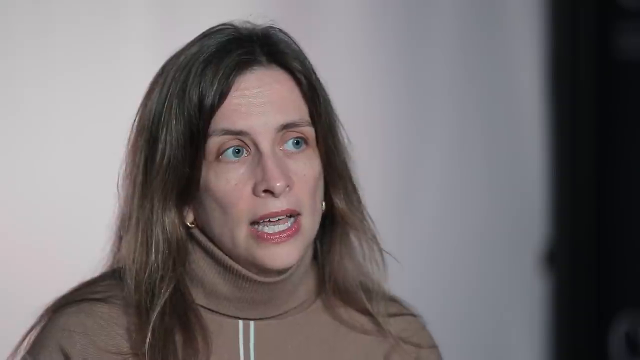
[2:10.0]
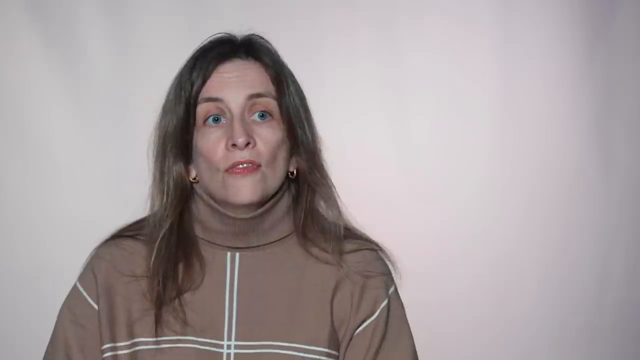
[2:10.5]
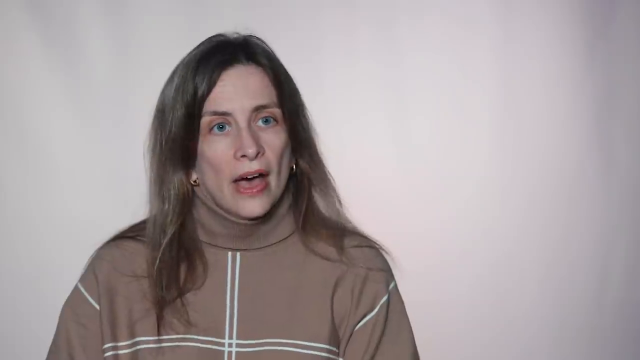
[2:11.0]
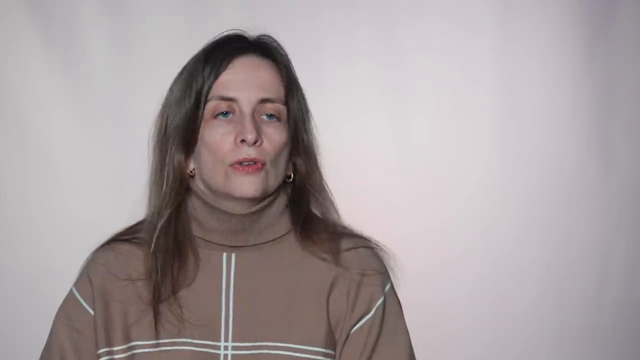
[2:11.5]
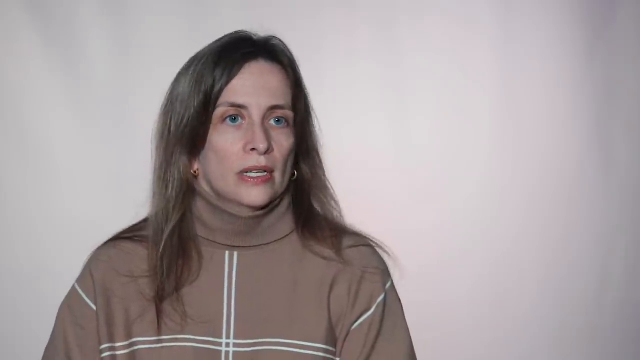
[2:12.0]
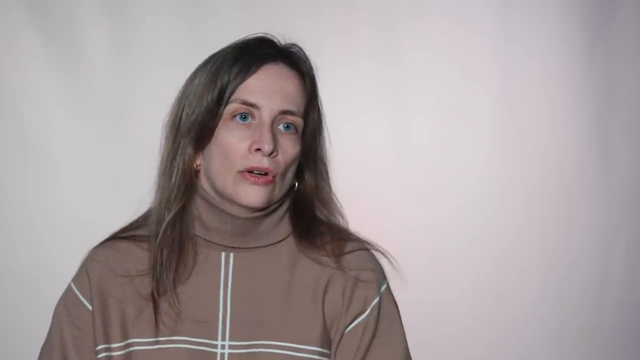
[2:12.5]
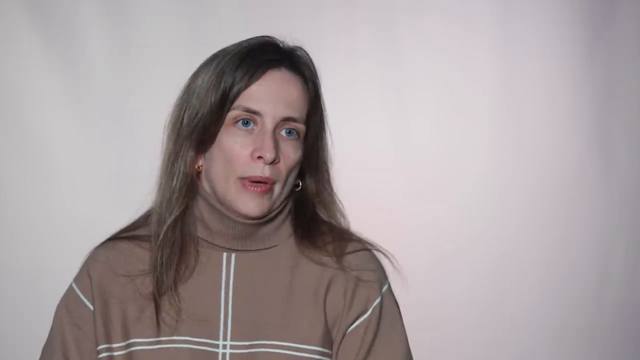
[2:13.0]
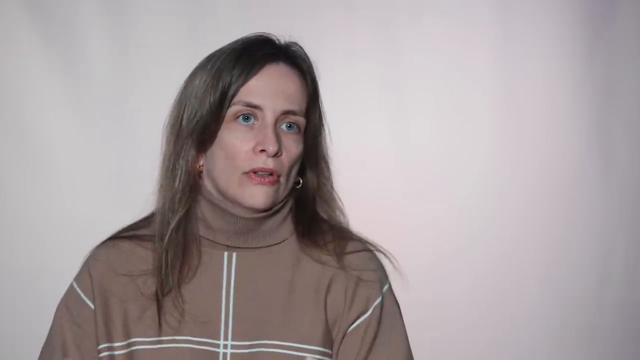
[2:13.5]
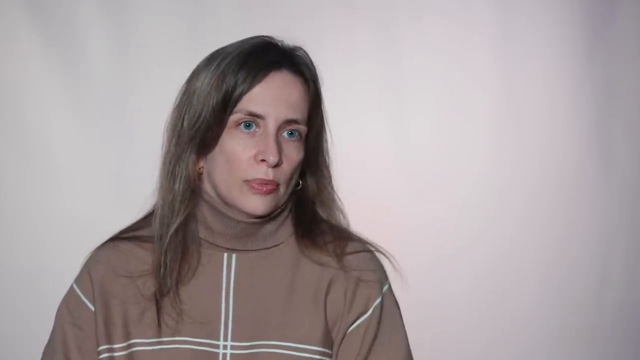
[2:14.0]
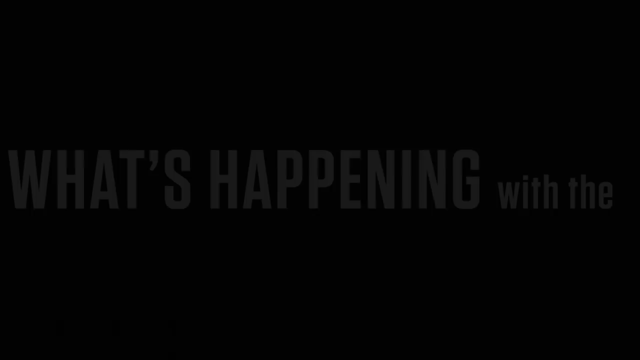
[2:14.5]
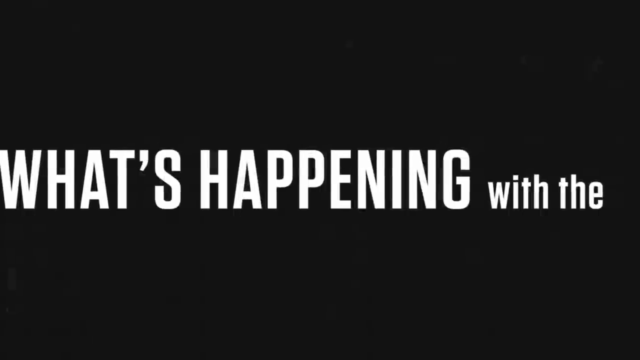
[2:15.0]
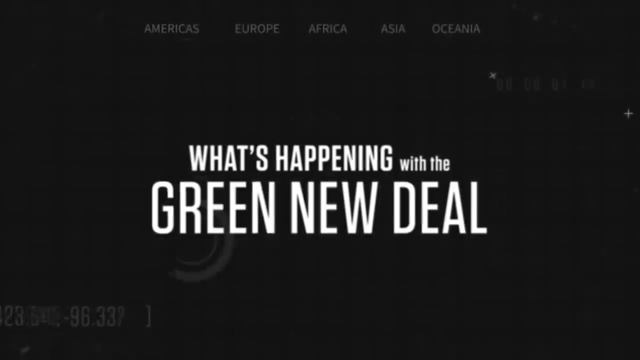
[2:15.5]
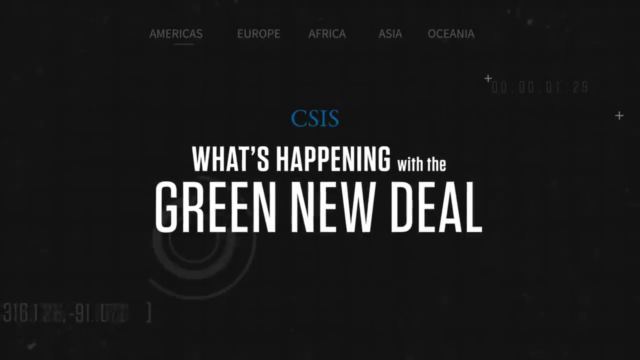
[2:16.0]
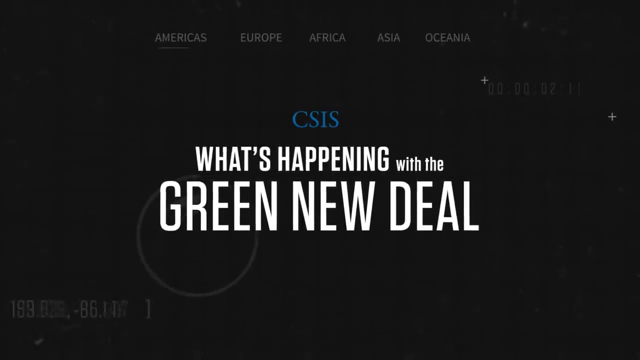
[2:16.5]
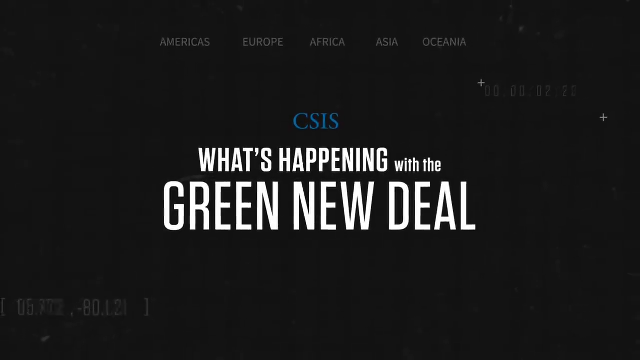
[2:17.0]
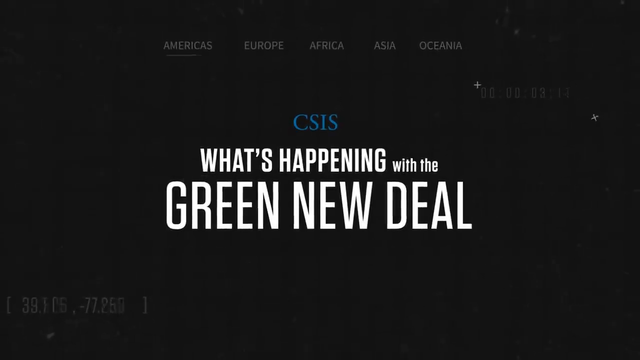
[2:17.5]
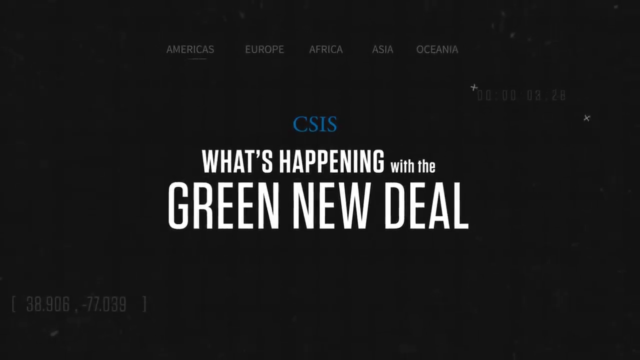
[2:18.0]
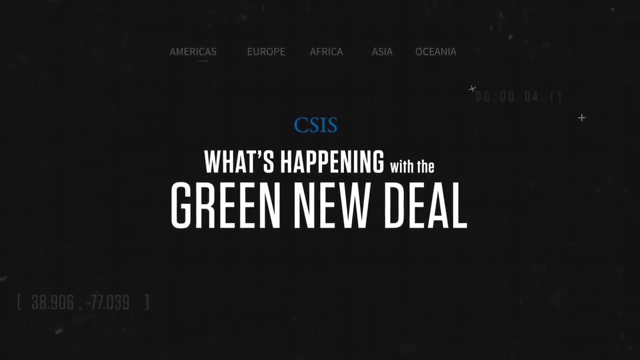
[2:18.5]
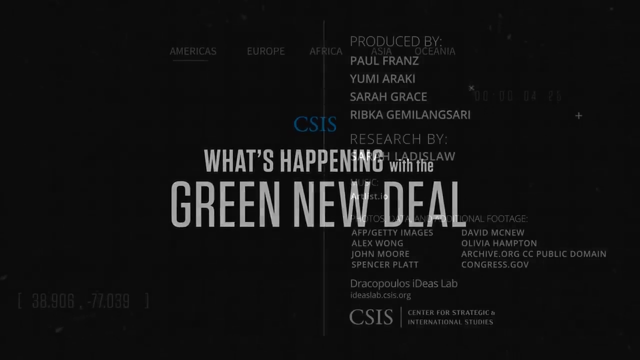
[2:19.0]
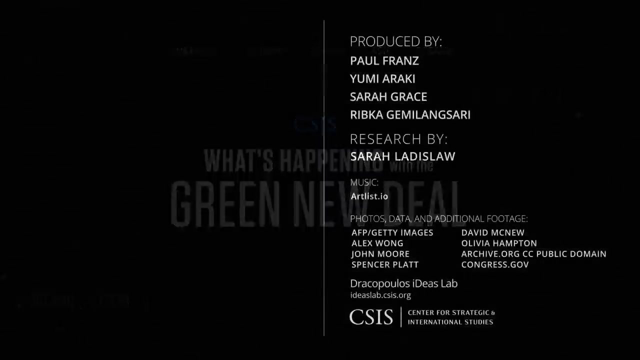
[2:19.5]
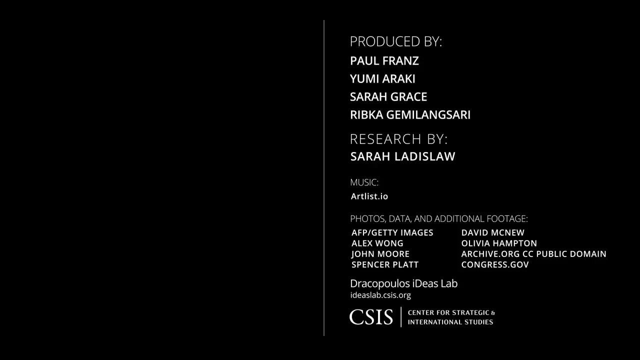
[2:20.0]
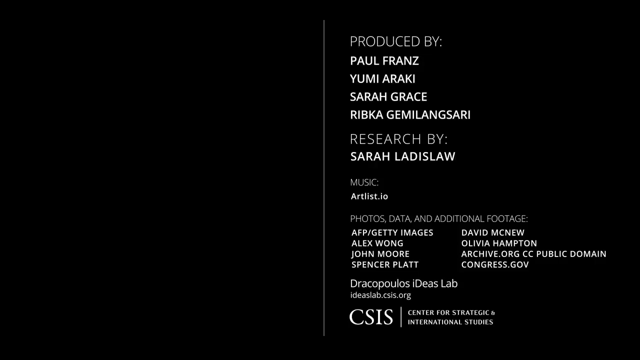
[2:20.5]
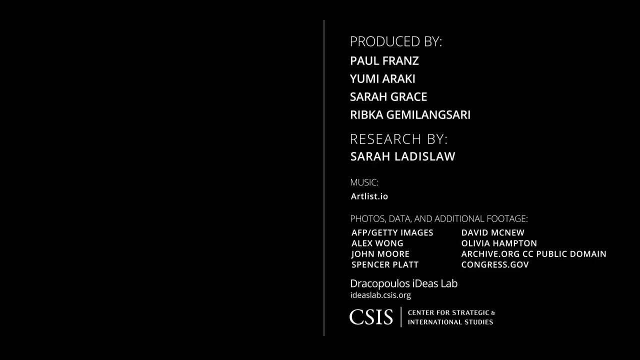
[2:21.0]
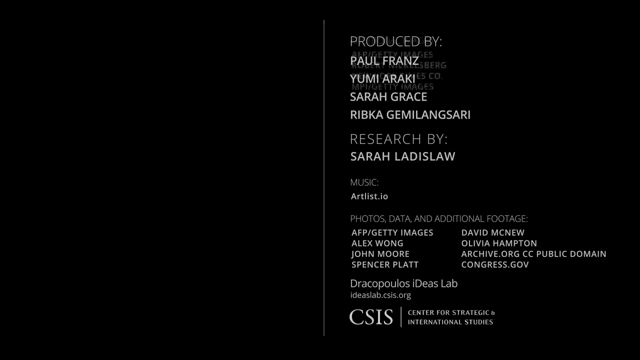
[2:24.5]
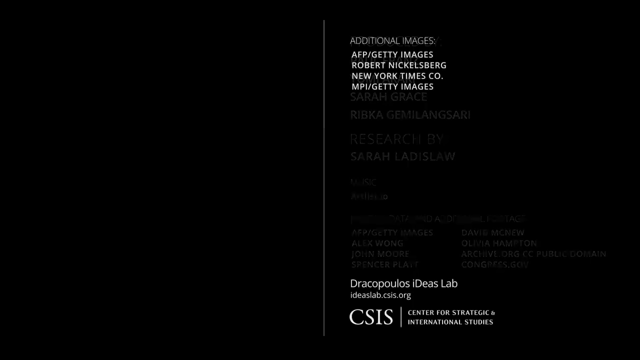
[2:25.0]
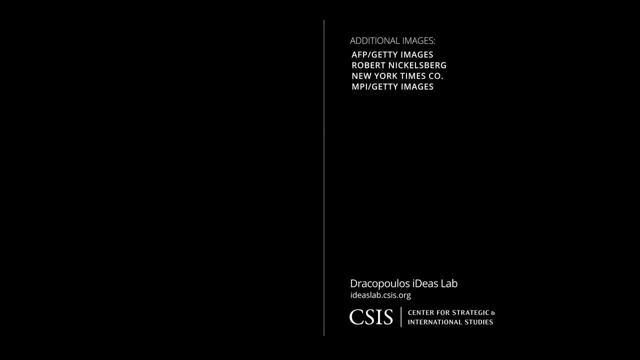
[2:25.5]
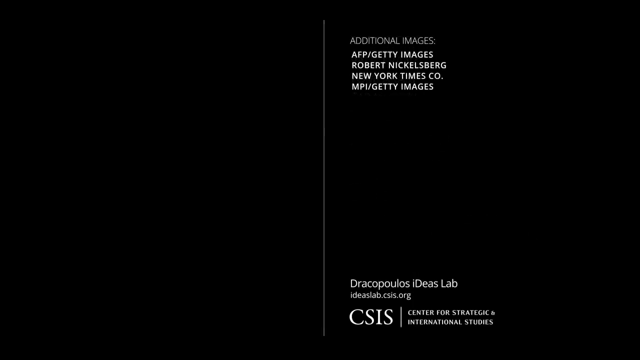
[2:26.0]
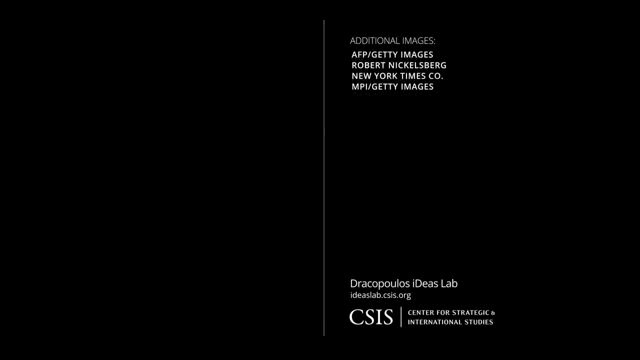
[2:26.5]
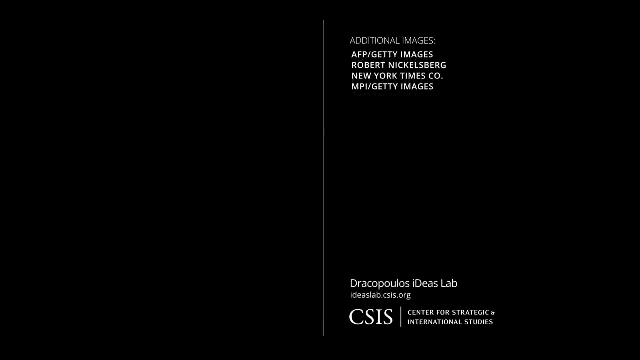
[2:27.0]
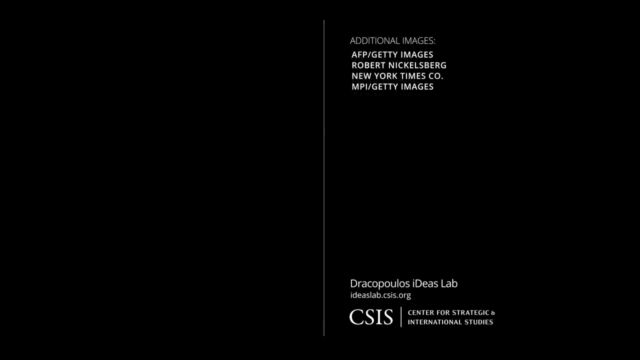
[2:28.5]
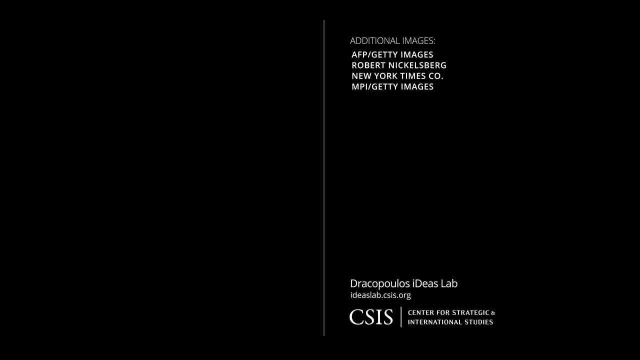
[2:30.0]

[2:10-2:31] A white woman with brown hair and red lipstick, wearing a brown turtleneck top with two white lines going down the center, talks to the interviewer in front of a white background with a bit of black on the right side. The image then goes black, and white text in the center reads "what's happening with the". Up top, in faded white, it reads "Americas, Europe, Africa, Asia, Oceania"; the next line down reads "CSIS" in blue, and underneath in white lettering it says "what's happening with the Green New Deal". On a black screen, white lettering to the right of a faded white line reads "produced by", then "Paul Franz, Yuma Akari, Sarah Grace, Ribka Gemilangsari", then "researched by Sarah Ladeslaw". Underneath that is "musicartist.io", and below that "photos, data, and additional footage", followed by "AFP/Getty Images, David McNew", then "Alex Wong, Olivia Hampton, John Moore, archive.org, public domain", then "Spencer Platt, congress.gov", then "Dracopolis Ideas Lab" and "ideaslab.csis.org". Below that is "CSIS", a white line, and beside it "Center for Strategic and International Studies". The next screen, again with the faded white line in the middle, has white wording at the top reading "additional images, AFP/Getty Images, Robert Nickelsburg, New York Times Co., MPI/Getty Images".